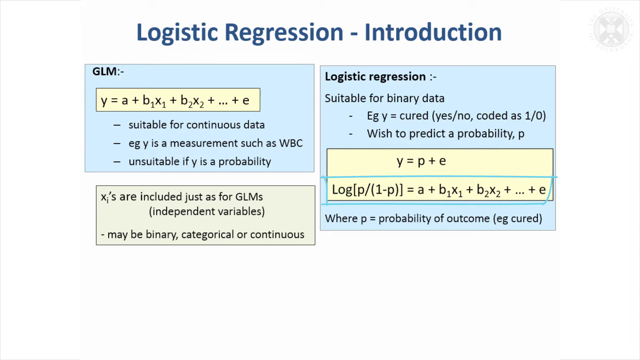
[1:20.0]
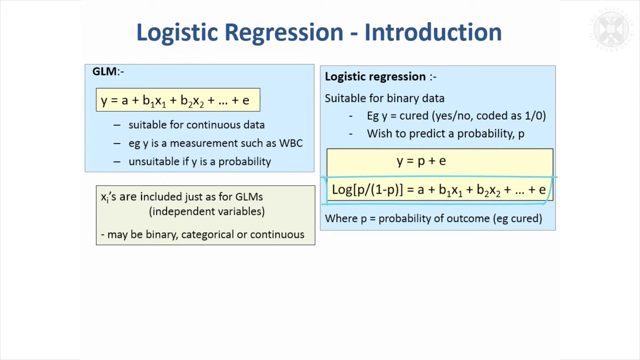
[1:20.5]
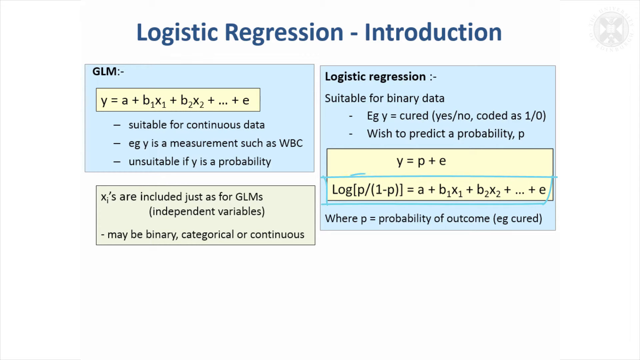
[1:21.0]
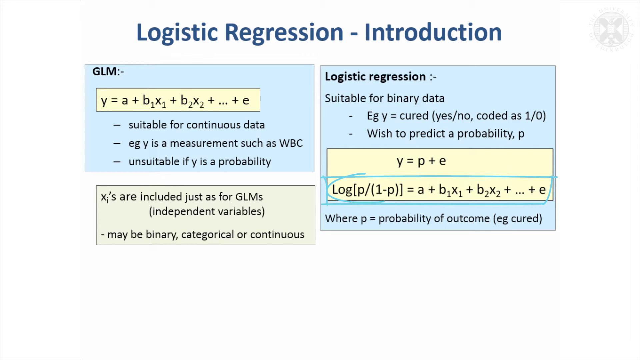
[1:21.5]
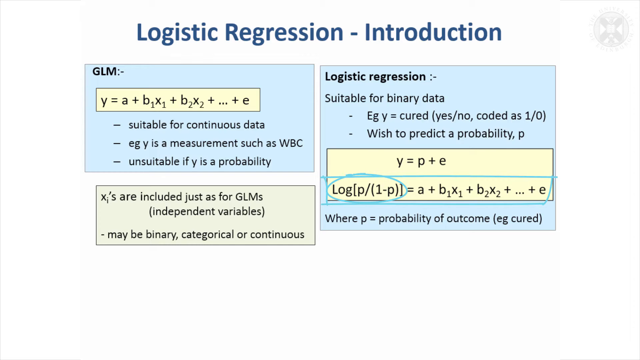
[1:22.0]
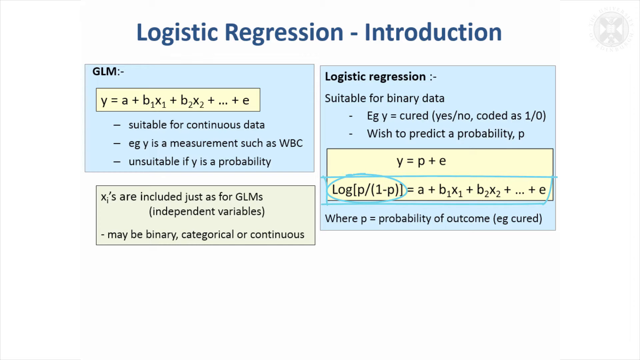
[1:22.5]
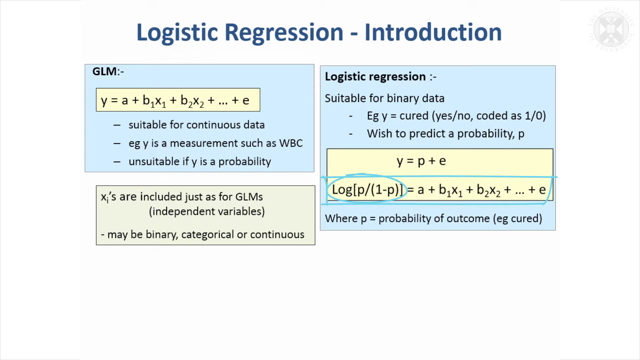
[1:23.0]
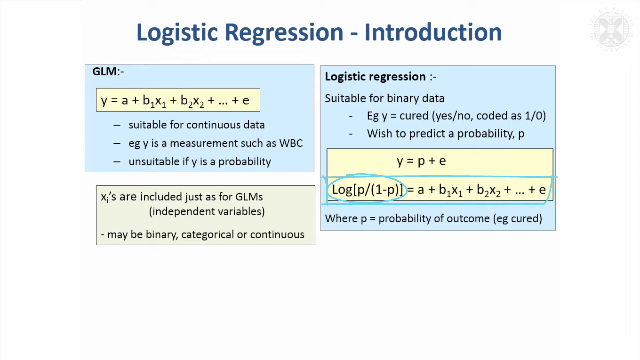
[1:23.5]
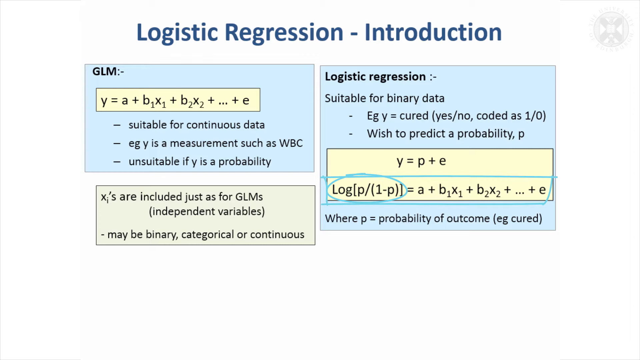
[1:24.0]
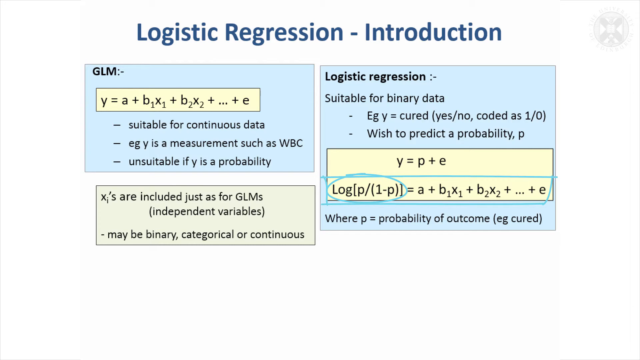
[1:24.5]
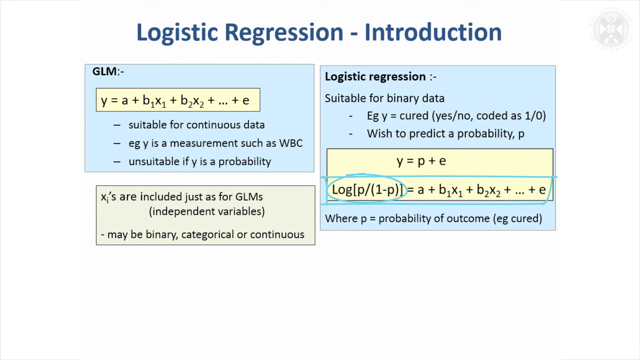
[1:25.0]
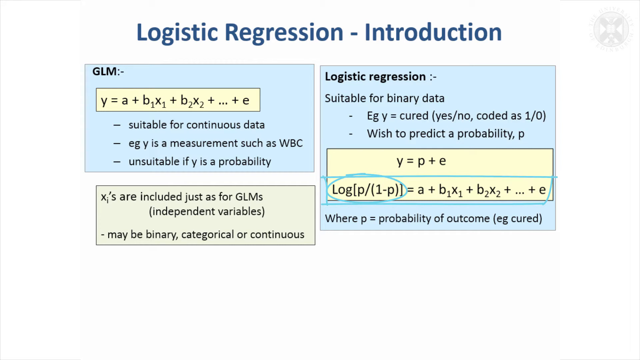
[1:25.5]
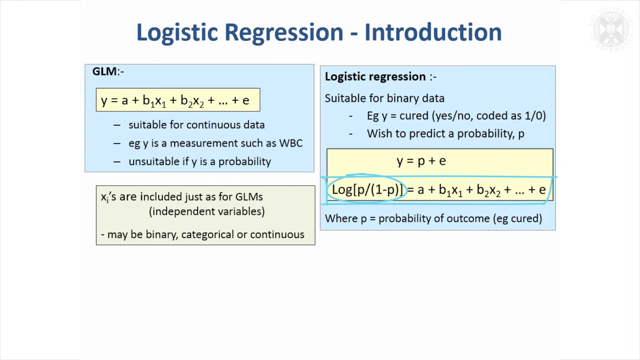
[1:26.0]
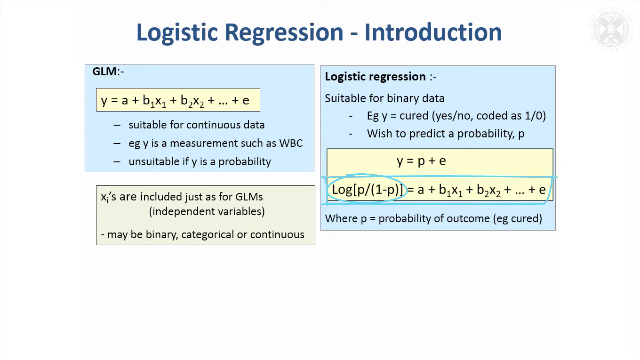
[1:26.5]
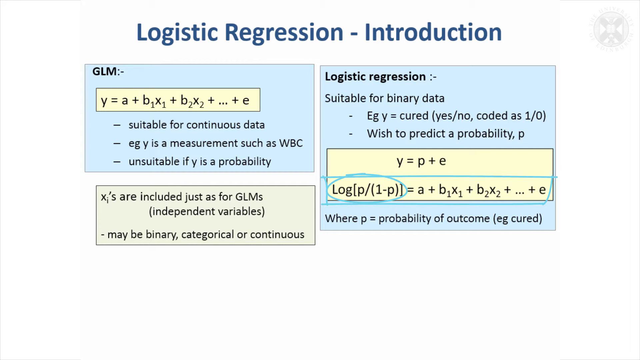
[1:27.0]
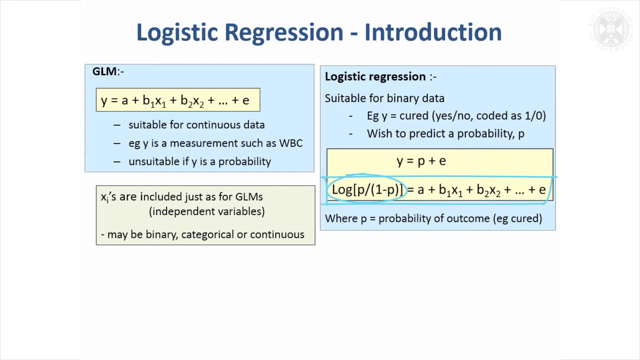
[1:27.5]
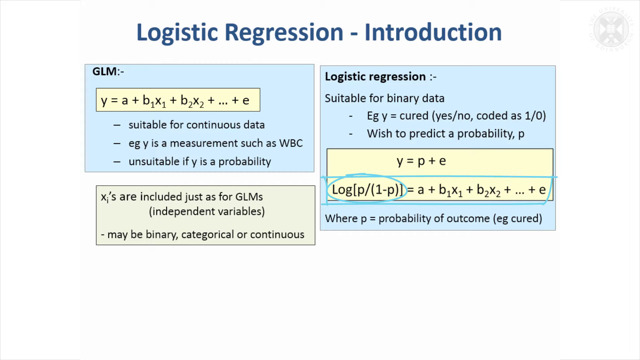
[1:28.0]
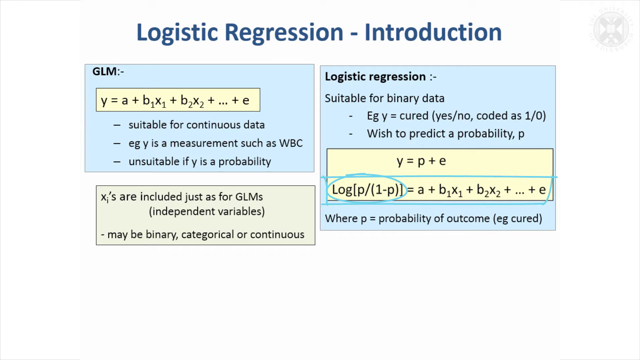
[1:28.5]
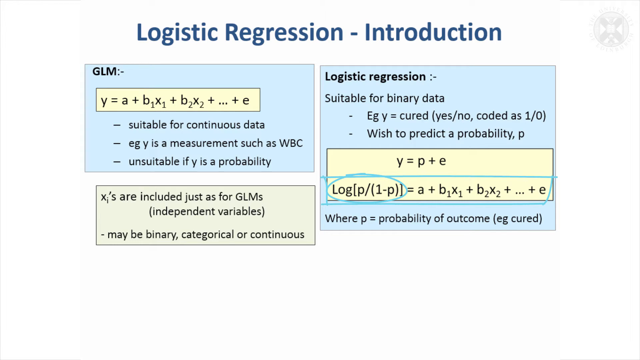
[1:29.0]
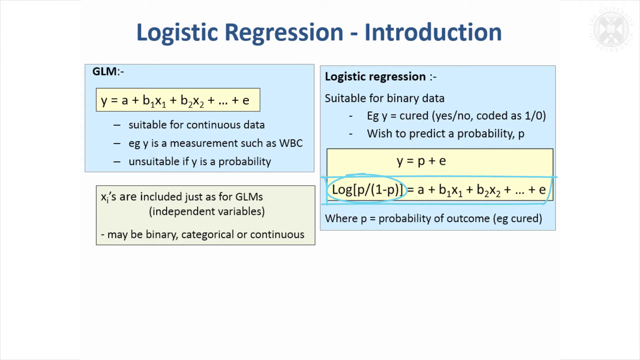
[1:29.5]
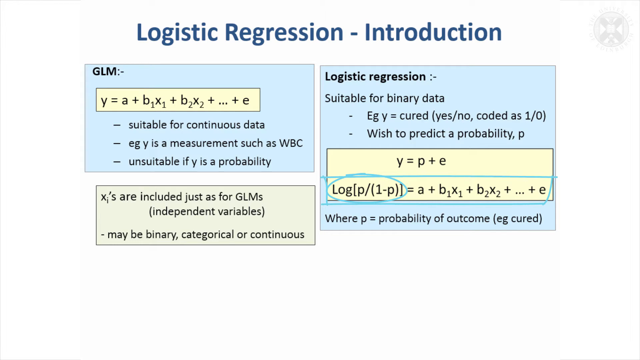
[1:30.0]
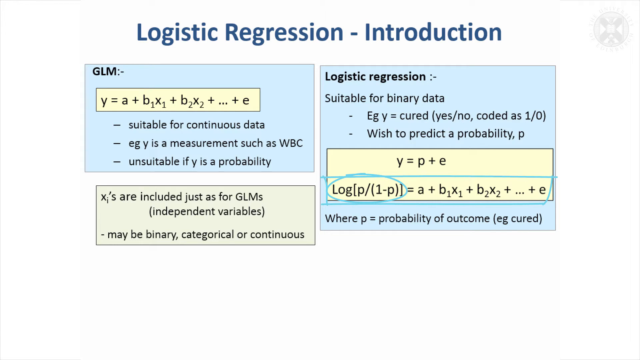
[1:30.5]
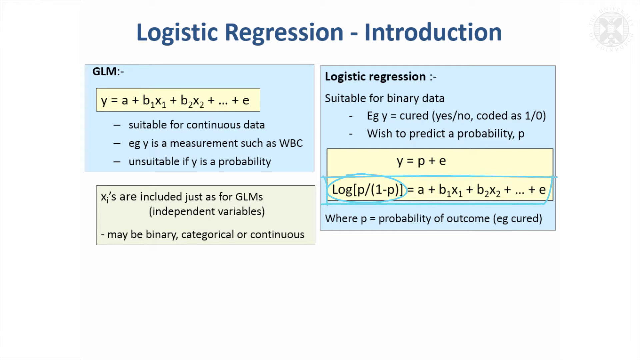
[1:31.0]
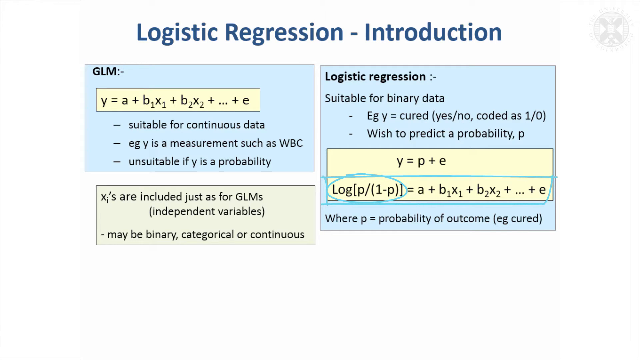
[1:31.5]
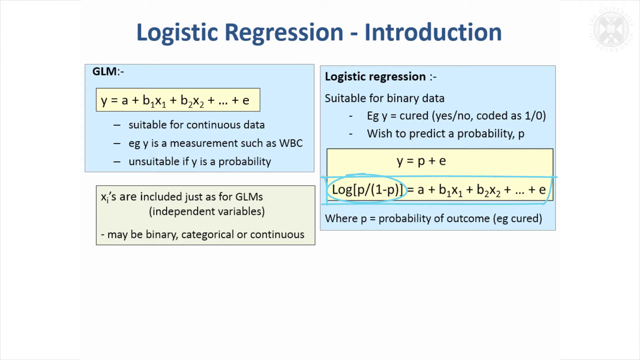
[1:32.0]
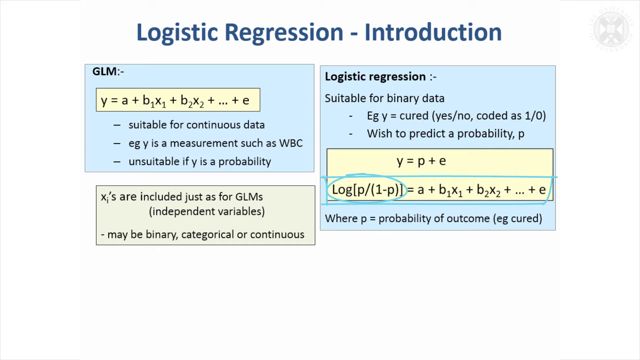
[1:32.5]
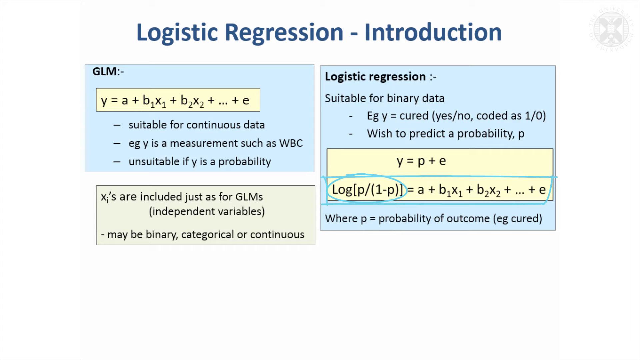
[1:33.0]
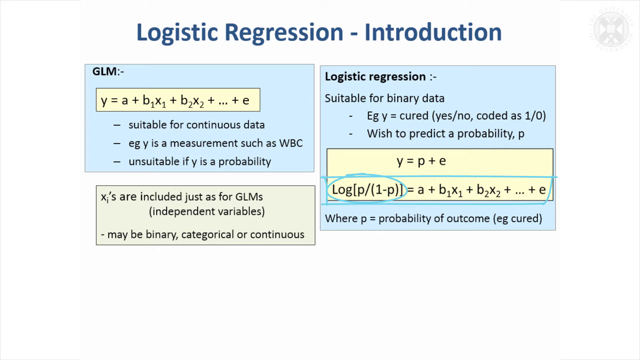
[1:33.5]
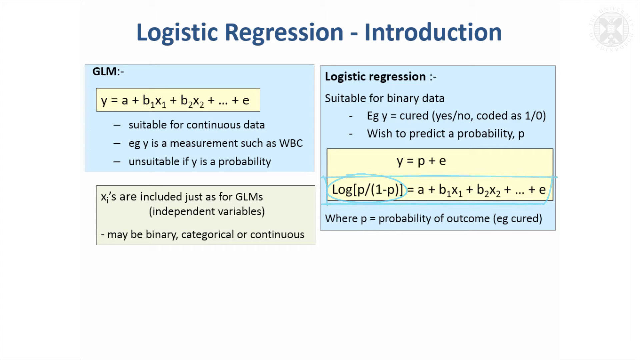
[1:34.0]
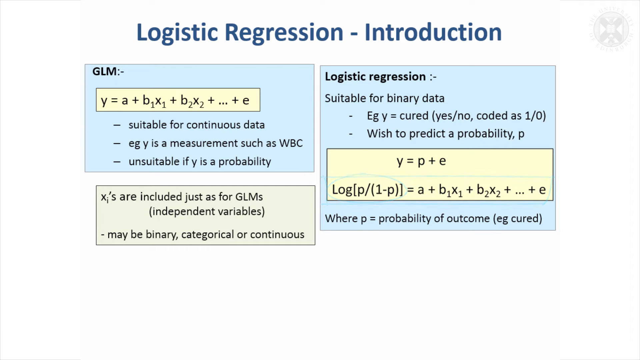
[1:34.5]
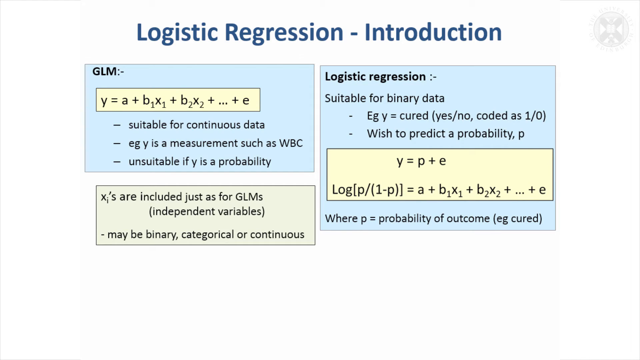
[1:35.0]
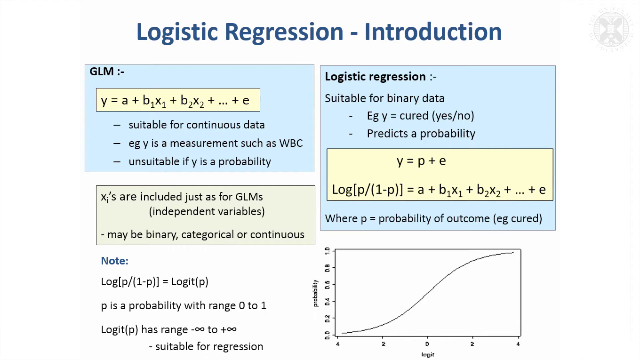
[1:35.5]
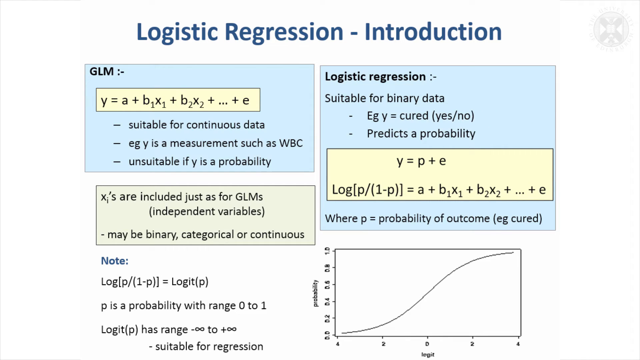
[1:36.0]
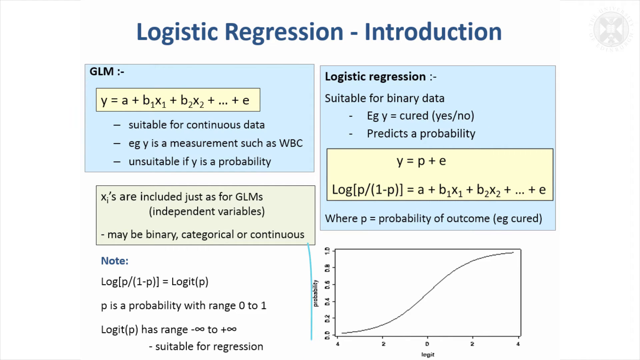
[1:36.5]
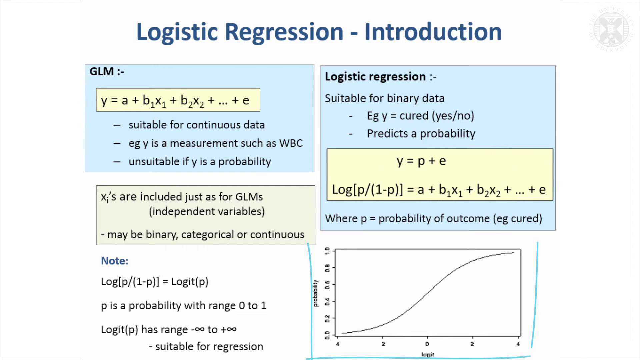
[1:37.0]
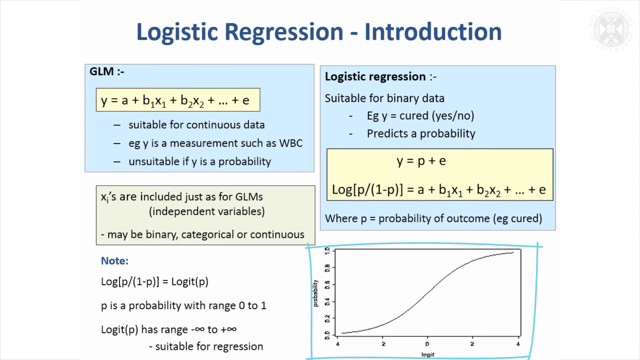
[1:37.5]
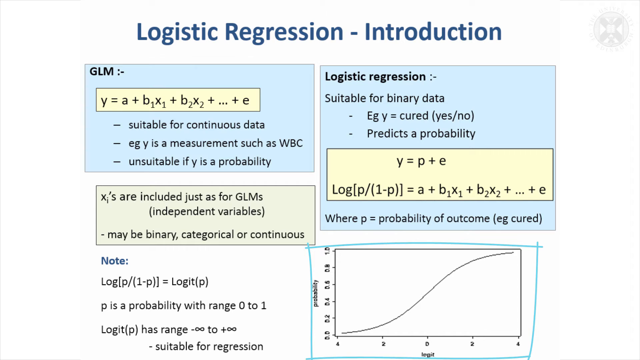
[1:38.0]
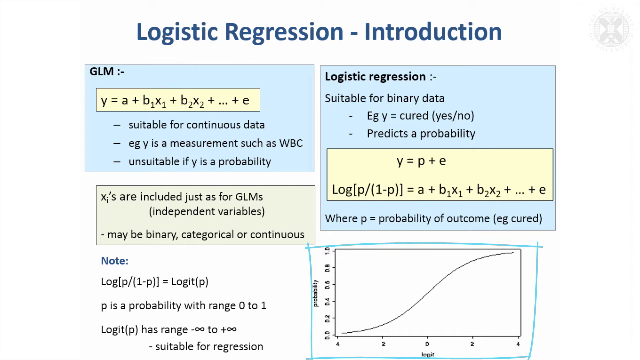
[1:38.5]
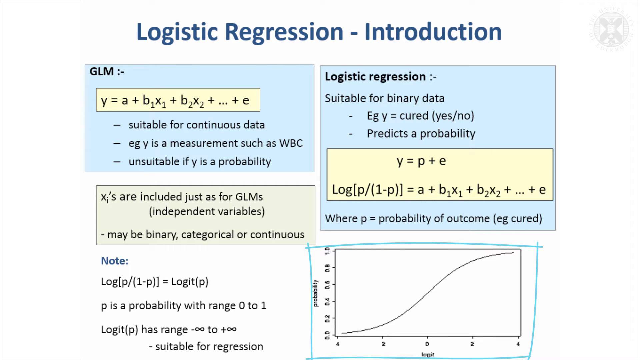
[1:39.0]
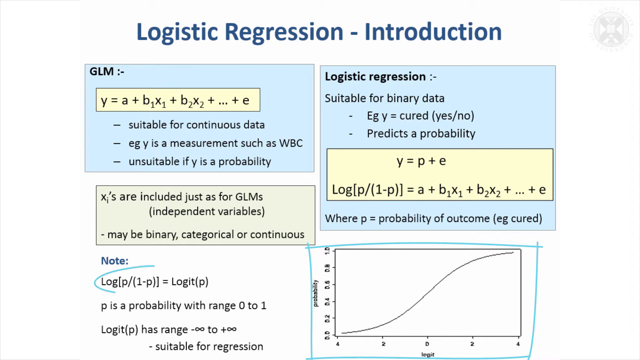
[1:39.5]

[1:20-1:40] A user explains a mathematics screen titled "Logistic Regression", showing the introduction, with several tables on a white background and a logo in the top right that is not very visible. The user explains the part of the table with the equation log(p/(1 − p)) = a + b1x1 + b2x2 + ... + e. Immediately afterward, near the end of this segment, a graph appears at the bottom of the screen; it concerns probability and has a curve on it. A note of a log appears to the left of the graph.